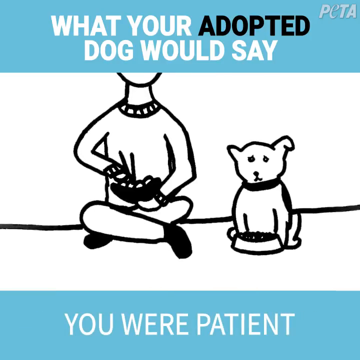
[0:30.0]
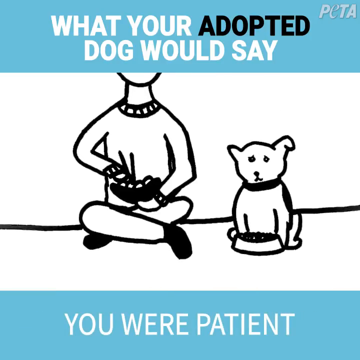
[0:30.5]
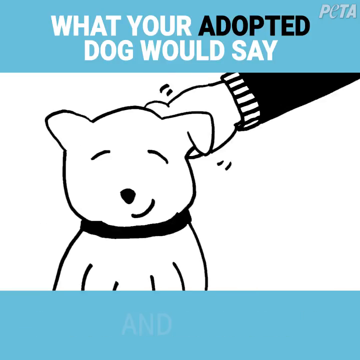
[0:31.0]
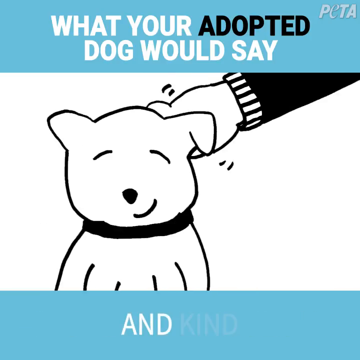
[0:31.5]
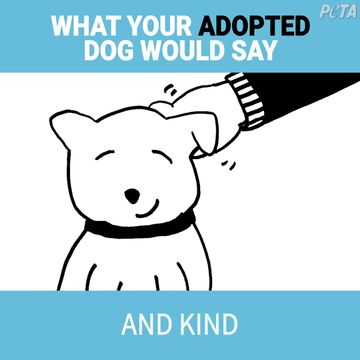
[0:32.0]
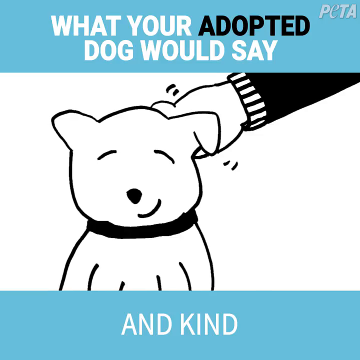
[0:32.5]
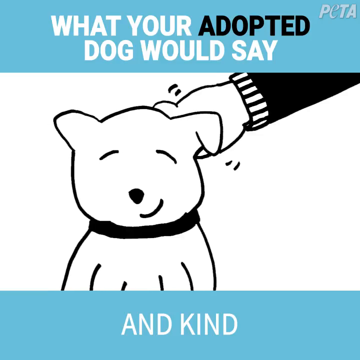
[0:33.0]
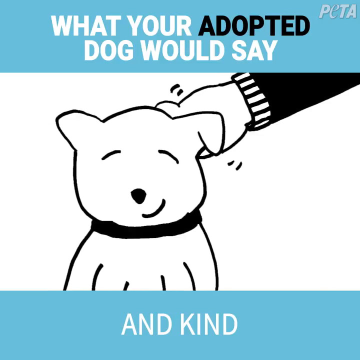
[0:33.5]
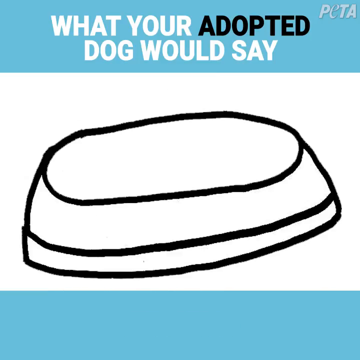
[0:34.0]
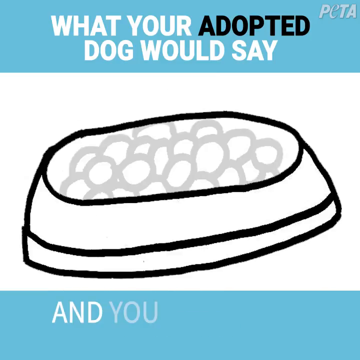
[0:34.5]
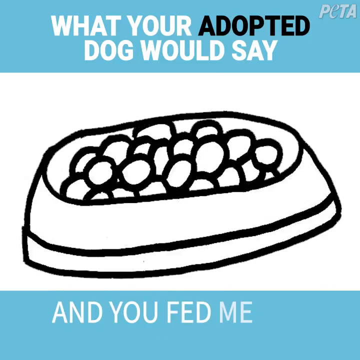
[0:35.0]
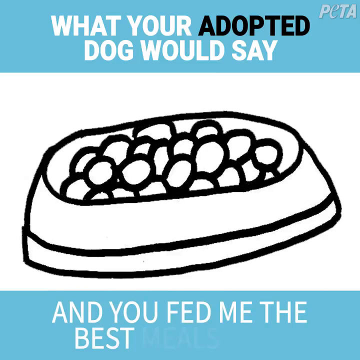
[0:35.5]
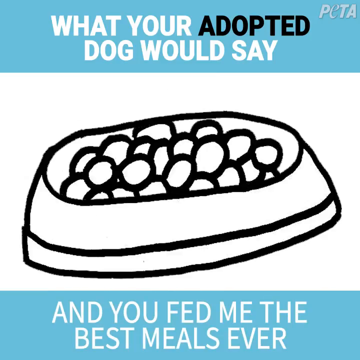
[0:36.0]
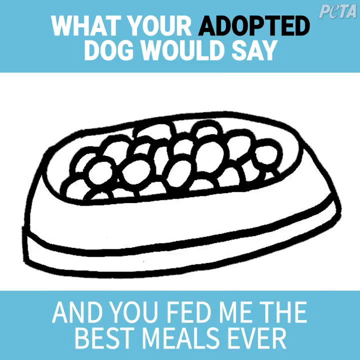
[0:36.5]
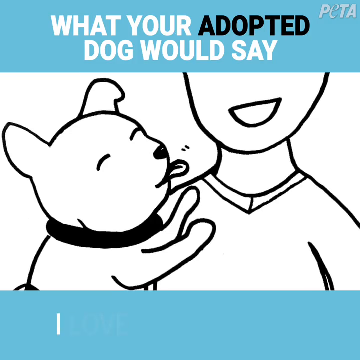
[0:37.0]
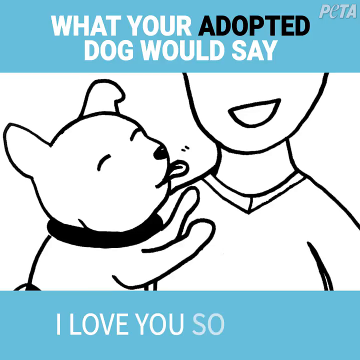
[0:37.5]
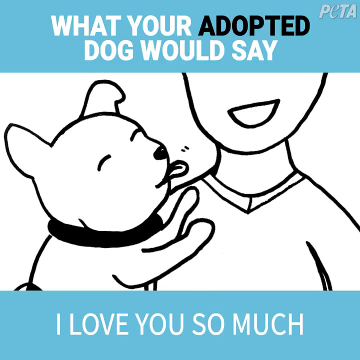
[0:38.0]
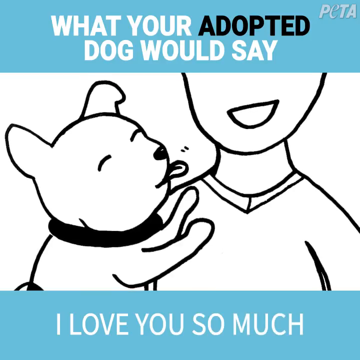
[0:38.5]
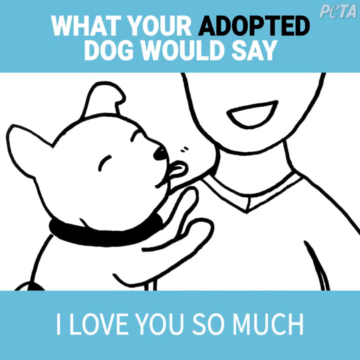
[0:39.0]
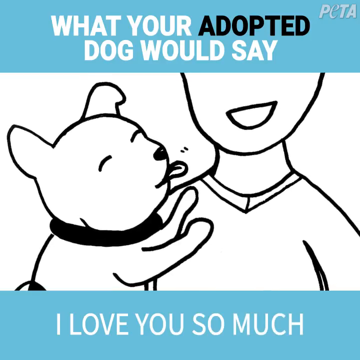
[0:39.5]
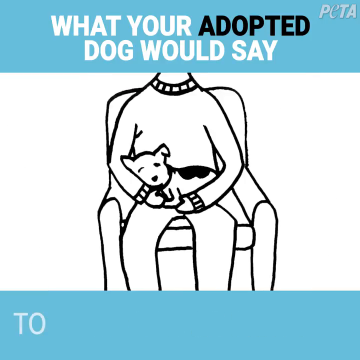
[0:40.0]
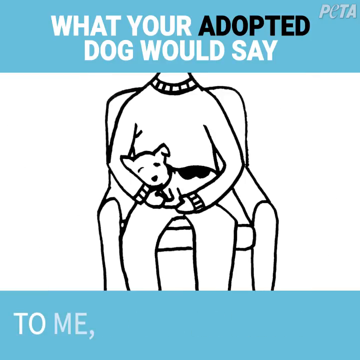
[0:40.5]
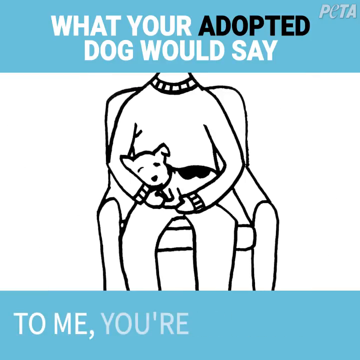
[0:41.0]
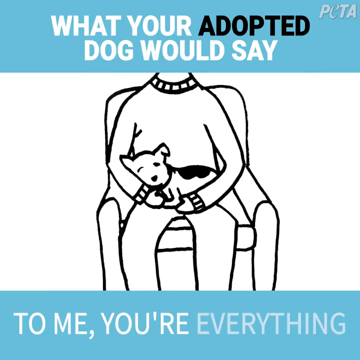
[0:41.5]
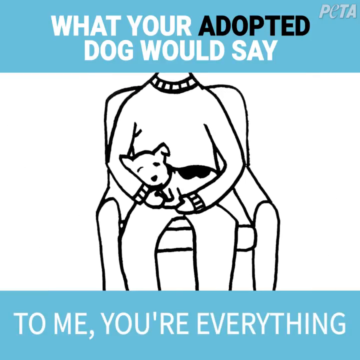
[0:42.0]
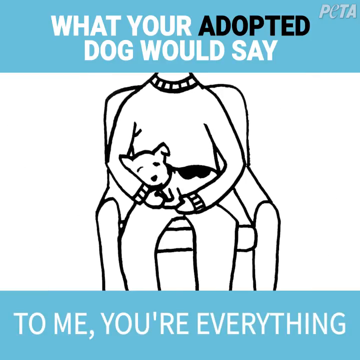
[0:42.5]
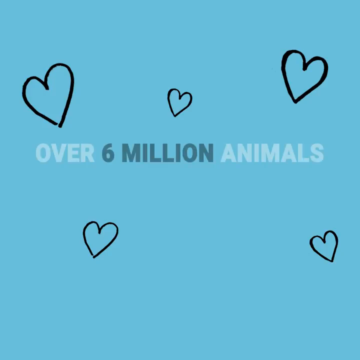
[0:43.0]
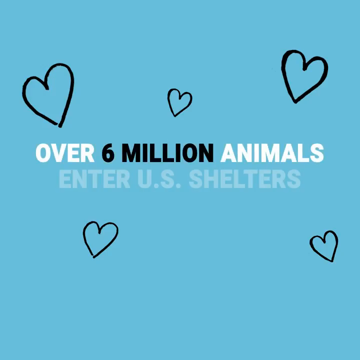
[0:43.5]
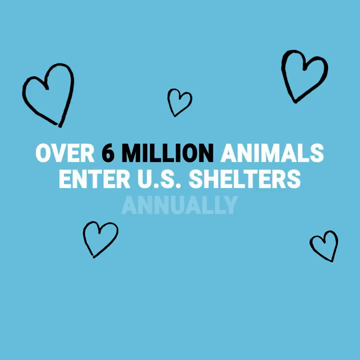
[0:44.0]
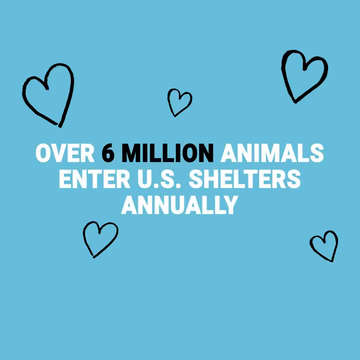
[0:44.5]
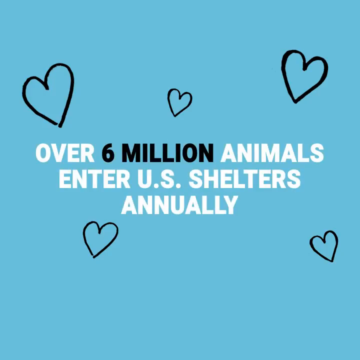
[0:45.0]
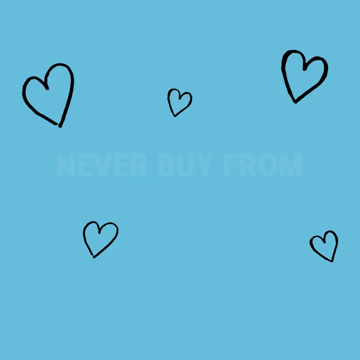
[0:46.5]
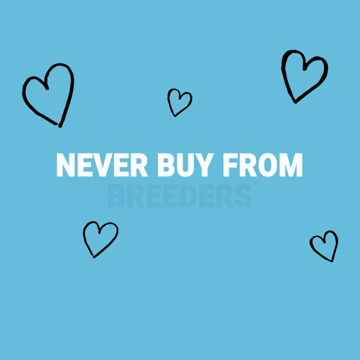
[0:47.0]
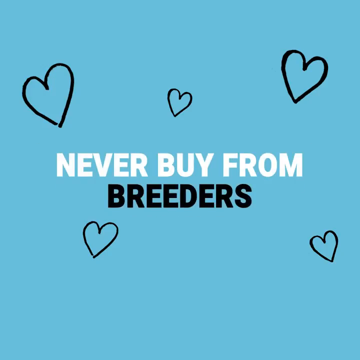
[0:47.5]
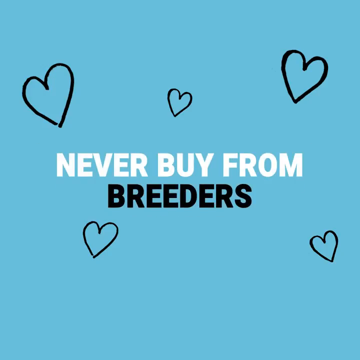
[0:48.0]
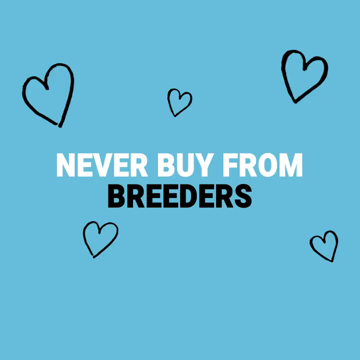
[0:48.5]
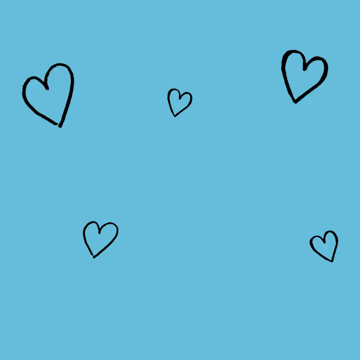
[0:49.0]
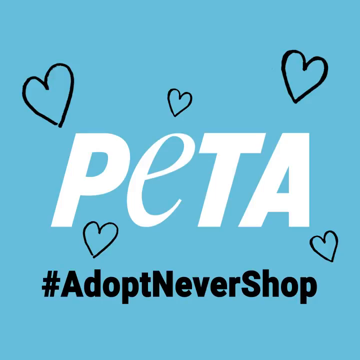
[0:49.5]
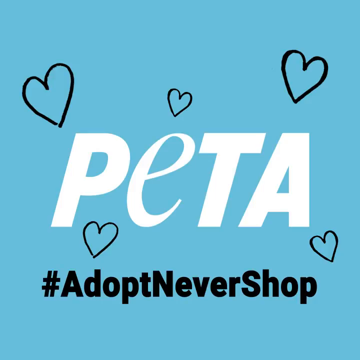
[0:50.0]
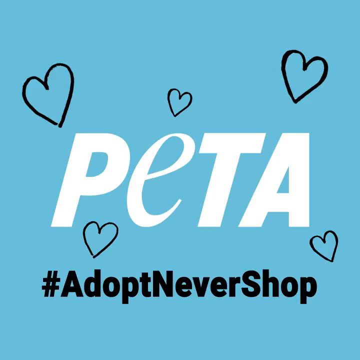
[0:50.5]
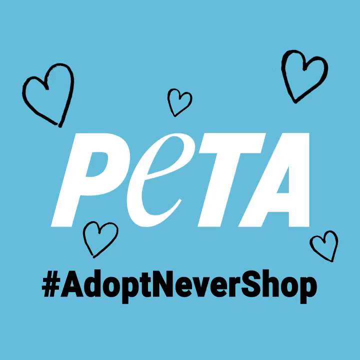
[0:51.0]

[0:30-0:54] A drawing shows a dog with a bowl of food in front of it and a human at its side, sat with a bowl, legs crossed, apparently holding chopsticks. The drawings are basic black line drawings on a white background, and the view gently zooms. Next comes a drawing of the dog with the pointy ear and the one flopping down, with a hand behind its head and a couple of lines suggesting movement, as if the back of its head is being scratched; the dog has a smiley expression. The empty bowl appears, and this time there is food in it. Meanwhile, text at the bottom describes how the dog feels and its wish just to be looked after and fed. A drawing then shows the face of a human holding the dog, which has jumped up and looks like it is trying to lick the human's face; both the dog and the human look happy. The image slowly zooms out, followed by a drawing of a person in an armchair with the dog all snuggled up, looking extremely comfortable. A quick change leads to a light blue background with love hearts scattered around and white bold text in the middle reading "over six million animals enter US shelters annually". This transitions into the text "never buy from breeders", then the PETA logo, with a hashtag in black at the bottom reading "#adopt, never stop". The video is promoting shelter dogs.